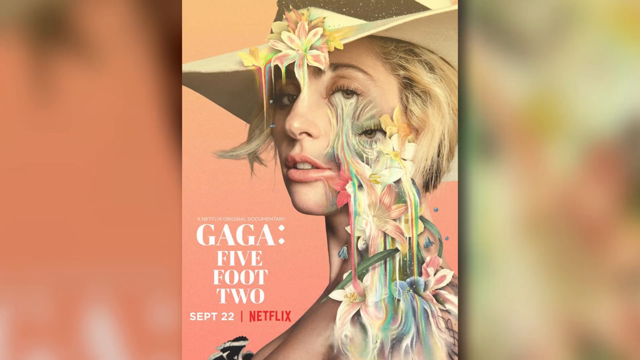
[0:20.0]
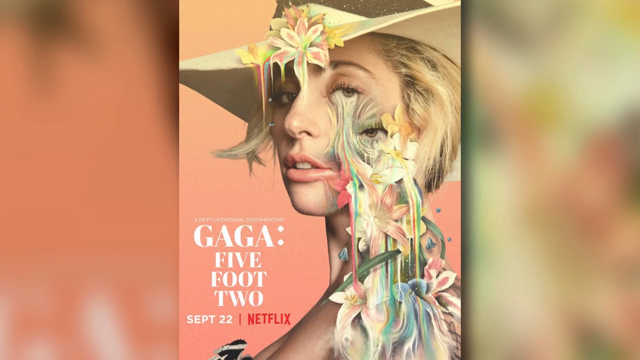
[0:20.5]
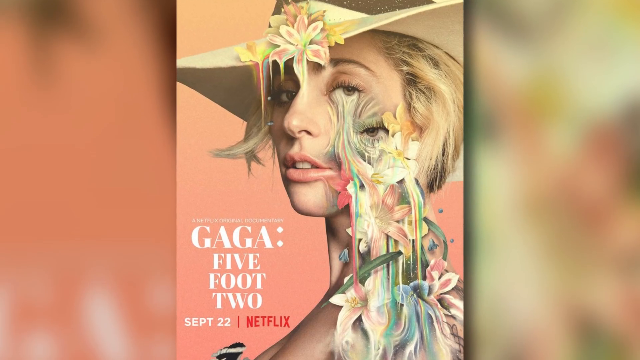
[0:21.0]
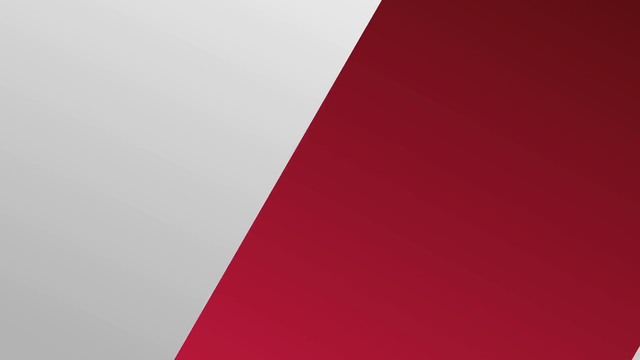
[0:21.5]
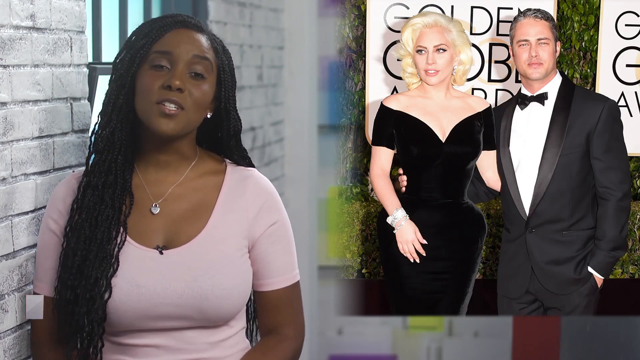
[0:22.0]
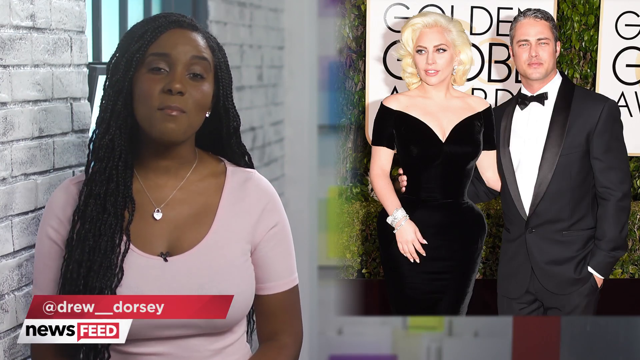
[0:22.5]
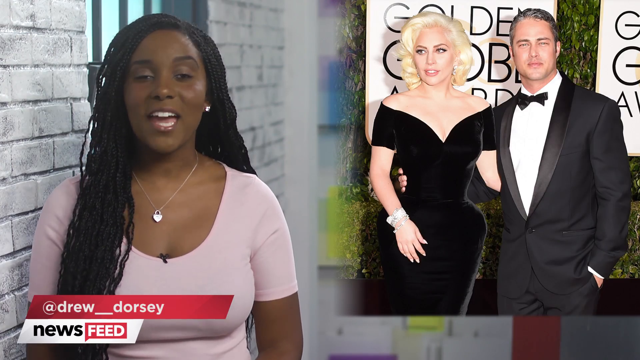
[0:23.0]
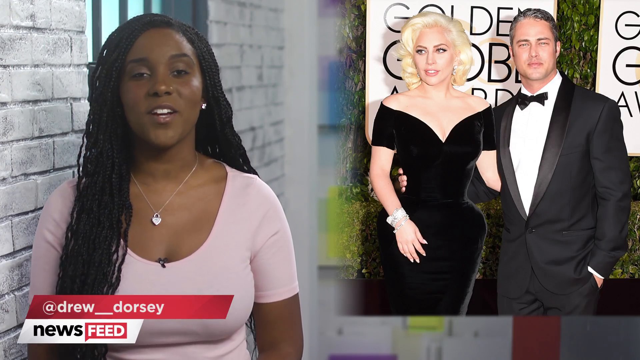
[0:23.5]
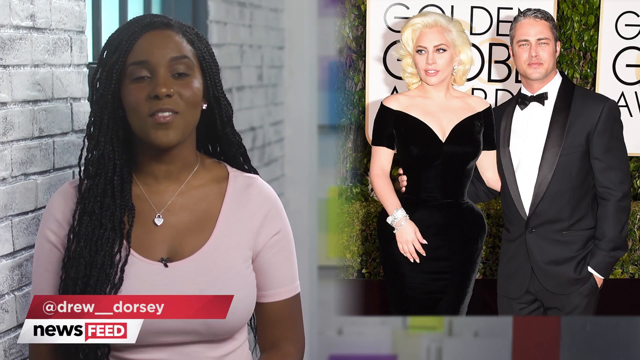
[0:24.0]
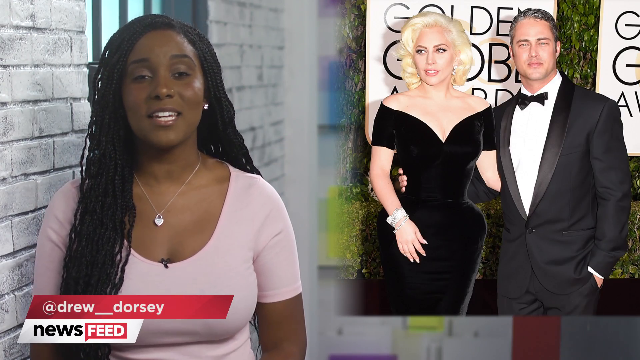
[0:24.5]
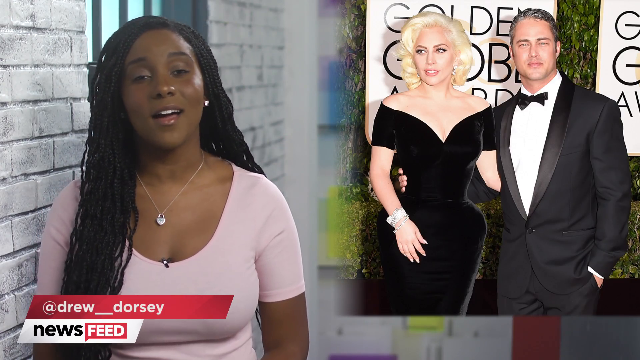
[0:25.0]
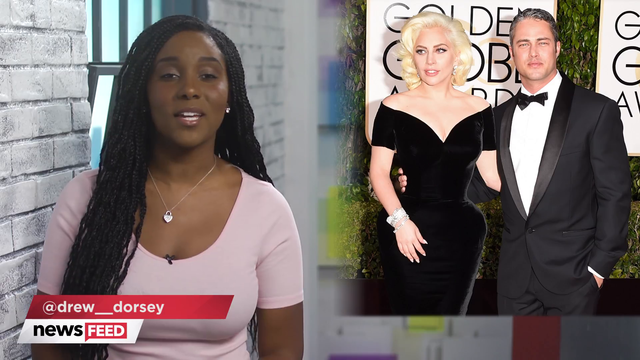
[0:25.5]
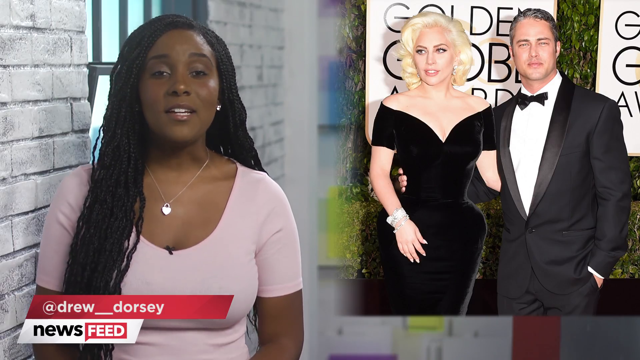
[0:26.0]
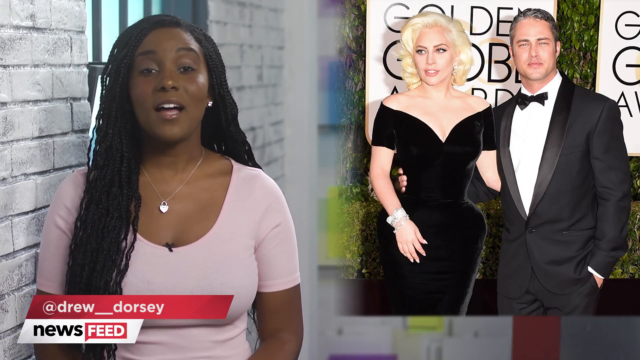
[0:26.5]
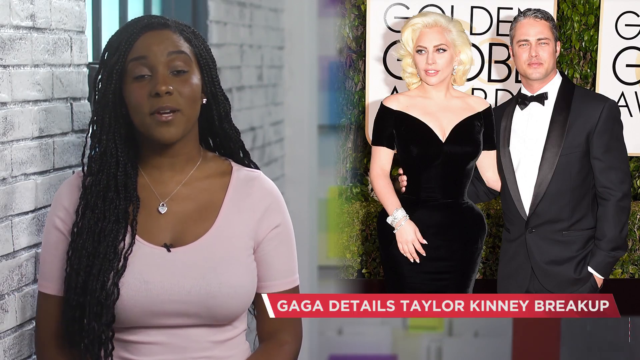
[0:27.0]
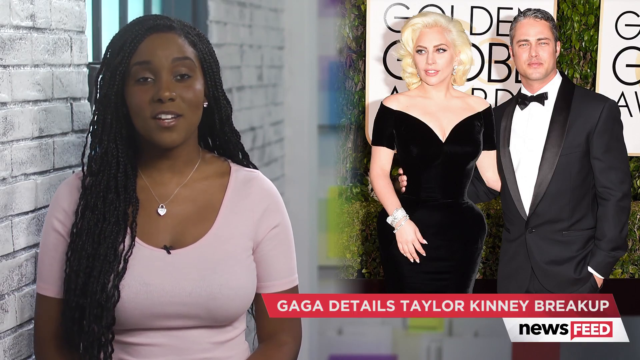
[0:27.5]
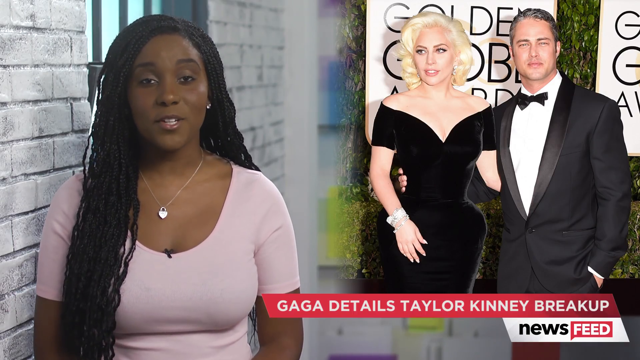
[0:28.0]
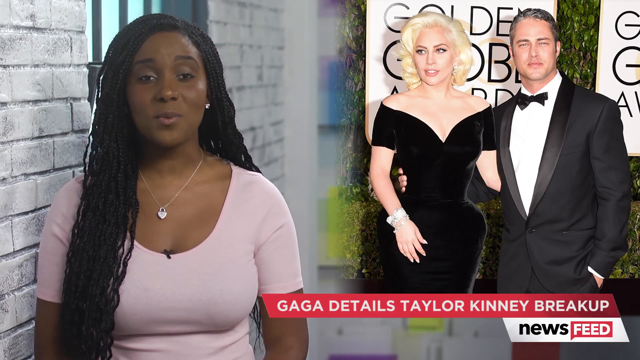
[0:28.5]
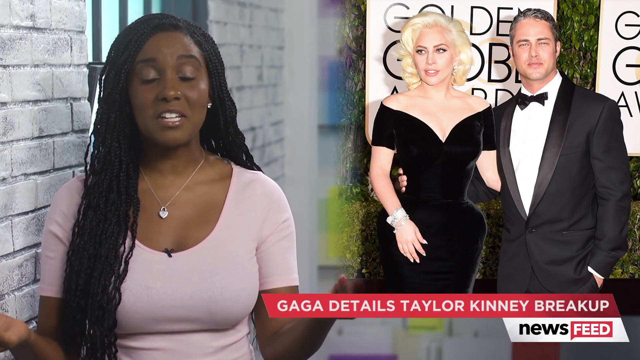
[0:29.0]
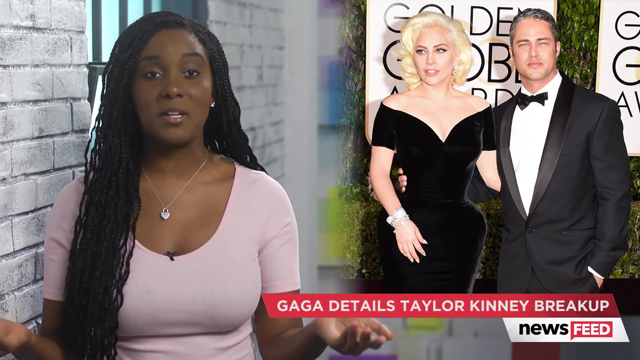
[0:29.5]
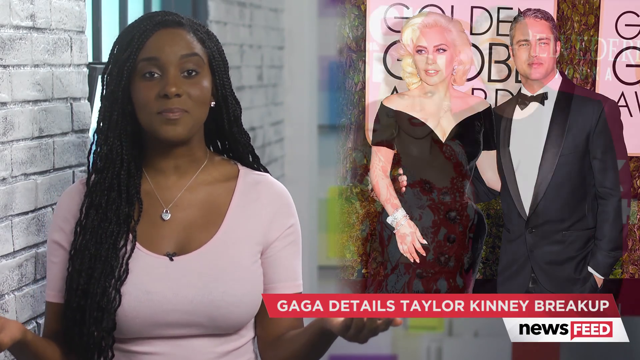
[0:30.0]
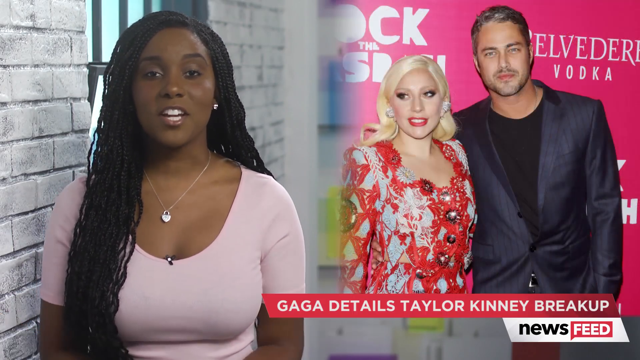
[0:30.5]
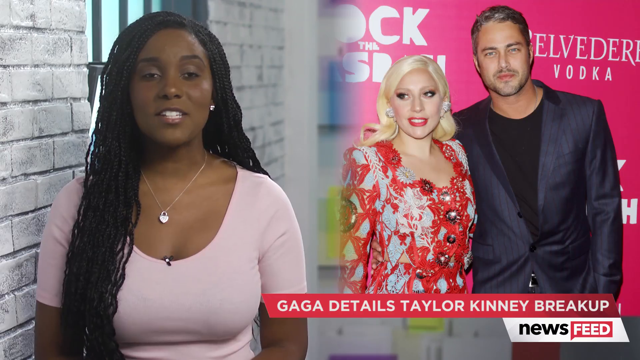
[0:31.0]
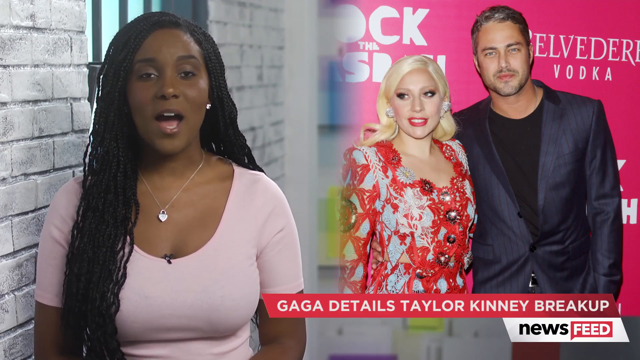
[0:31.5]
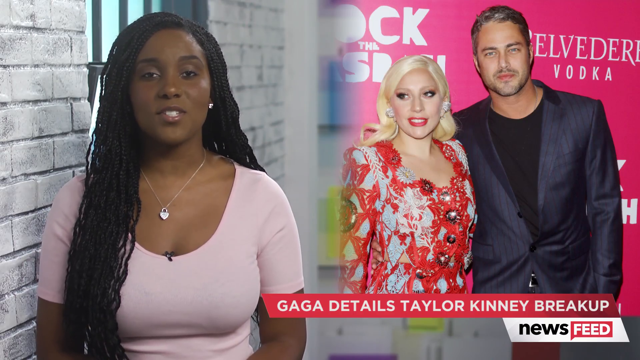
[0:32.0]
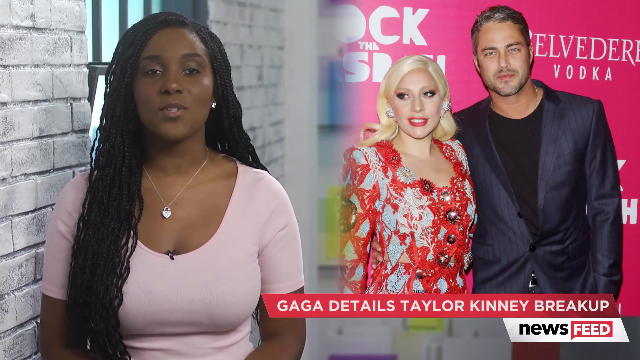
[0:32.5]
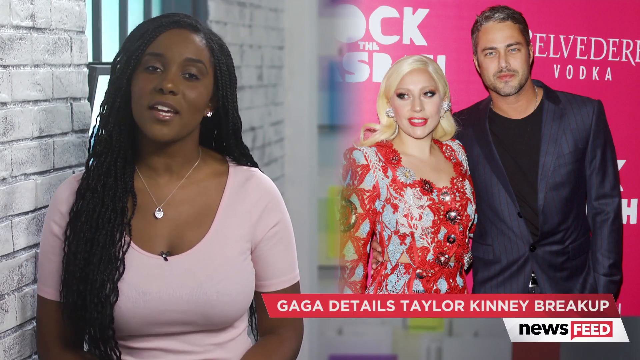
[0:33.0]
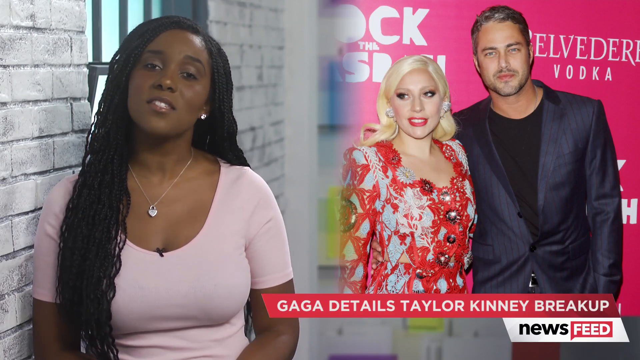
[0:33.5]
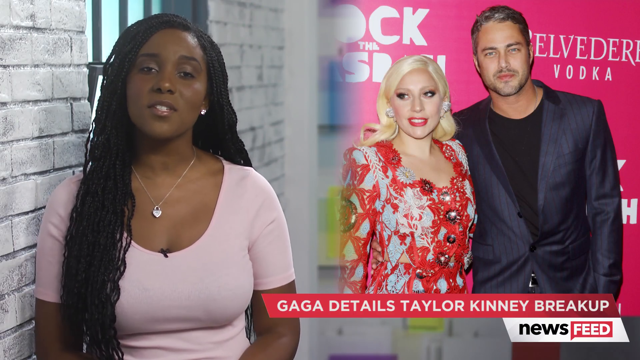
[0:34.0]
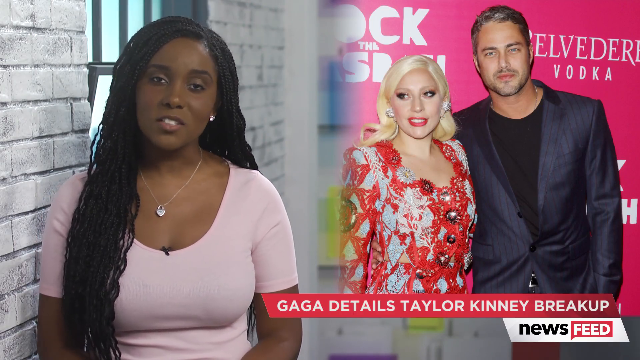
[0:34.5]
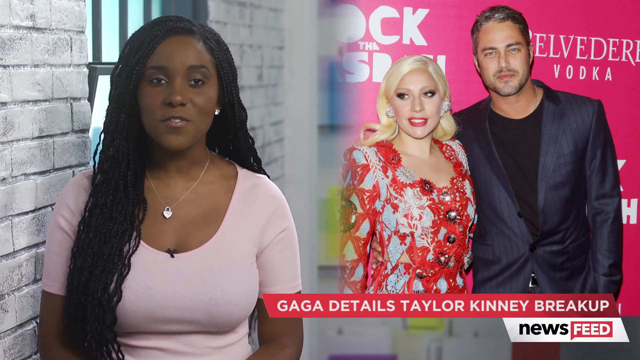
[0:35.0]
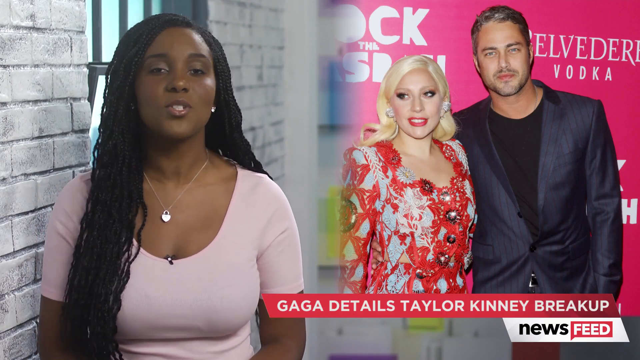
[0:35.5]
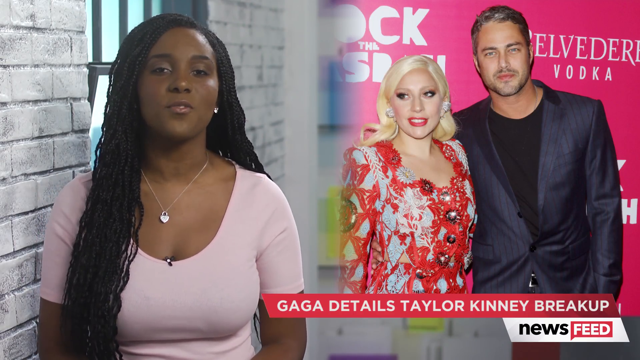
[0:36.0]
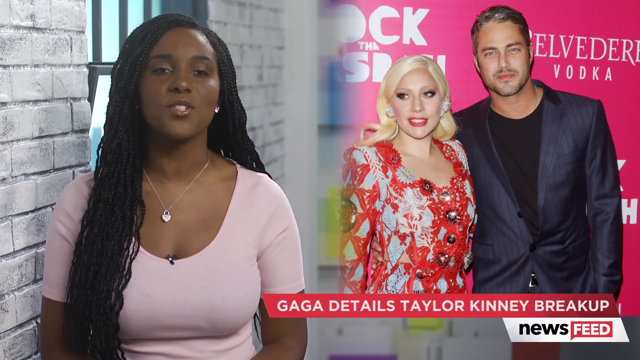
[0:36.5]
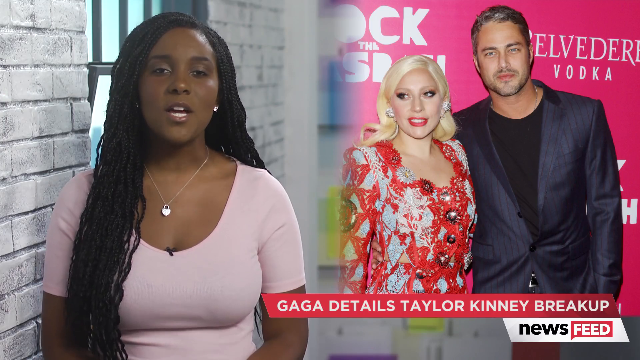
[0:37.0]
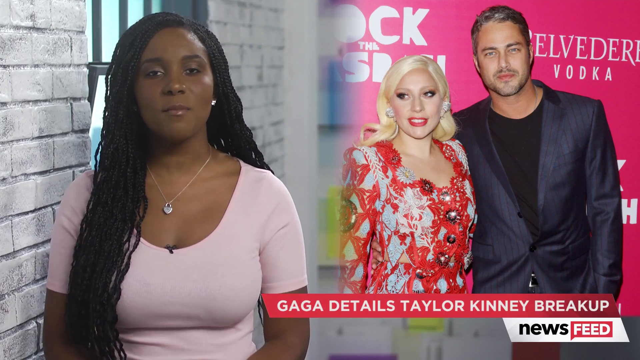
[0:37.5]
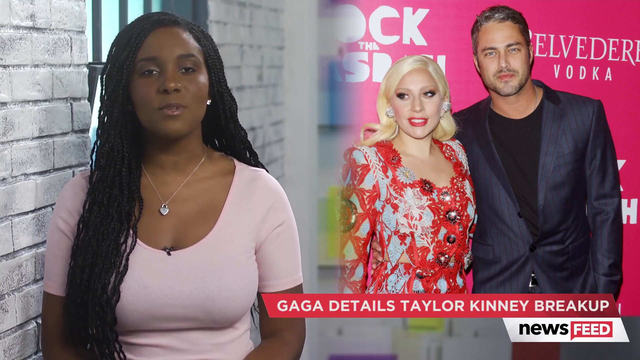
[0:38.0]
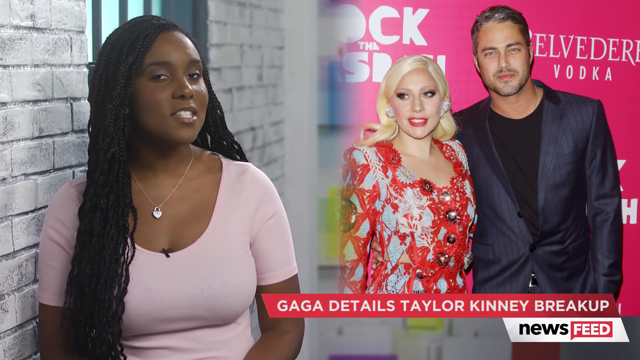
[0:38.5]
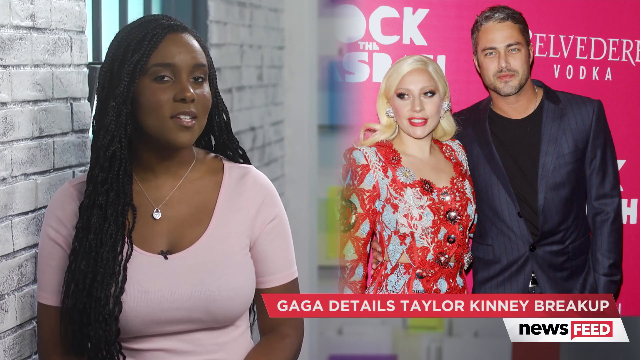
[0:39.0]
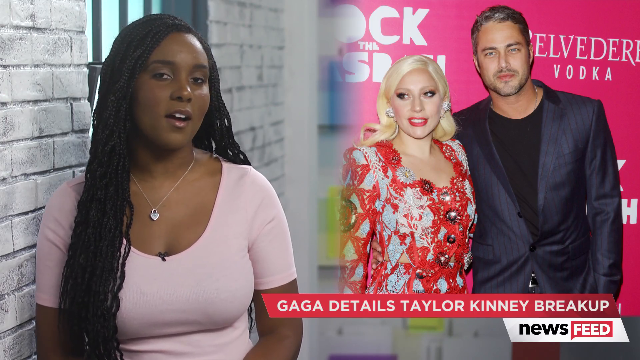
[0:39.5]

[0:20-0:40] A poster for a Netflix show called Gaga 5'2" appears. On the right-hand side is an extremely altered image of Lady Gaga with a distorted face. Colors run down from her eye and down her neck, where they transform into flowers, and she has a third eye on her cheek. The sides of her lips are also disfigured as color runs out from them. She wears a large white hat with black on top, and flowers that are also drained of color on the top of the hat. The bottom left-hand side of the poster says "September 22, Netflix". The scene then returns to the host, an African-American woman with long braided hair, wearing a white-pink top and a lock necklace.